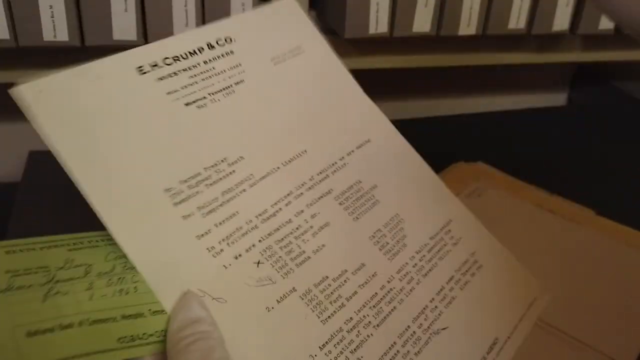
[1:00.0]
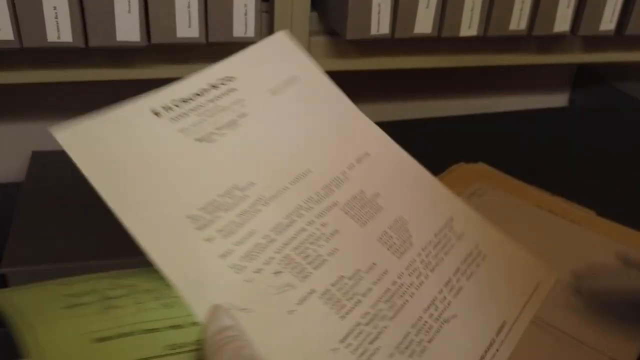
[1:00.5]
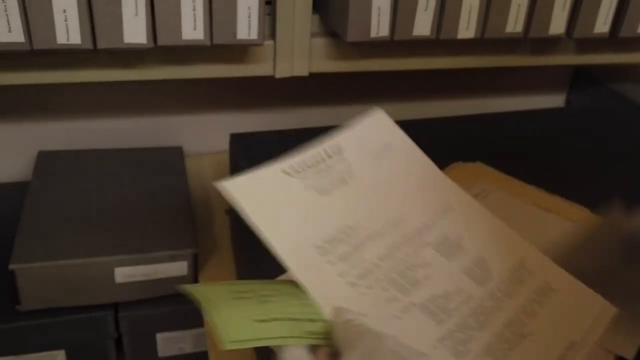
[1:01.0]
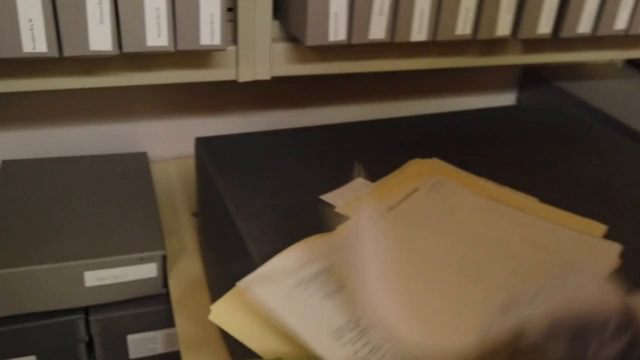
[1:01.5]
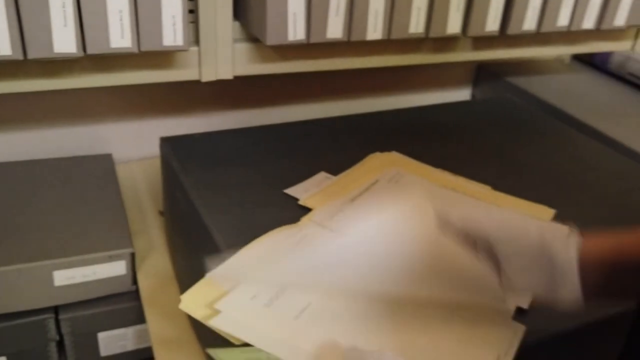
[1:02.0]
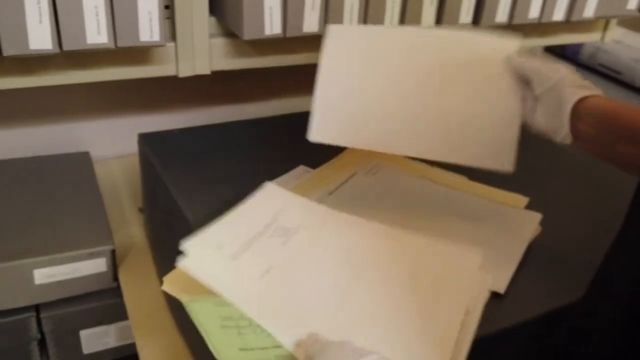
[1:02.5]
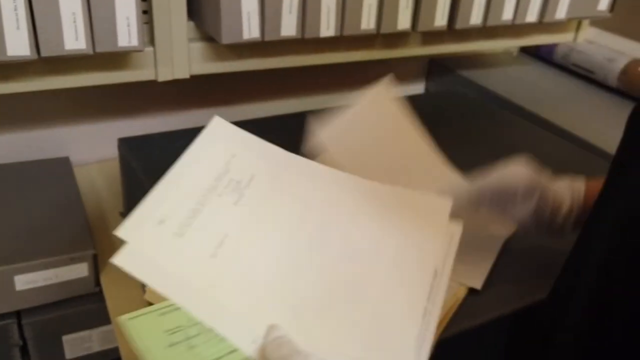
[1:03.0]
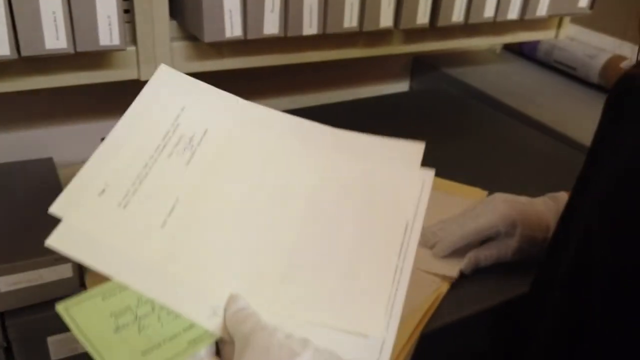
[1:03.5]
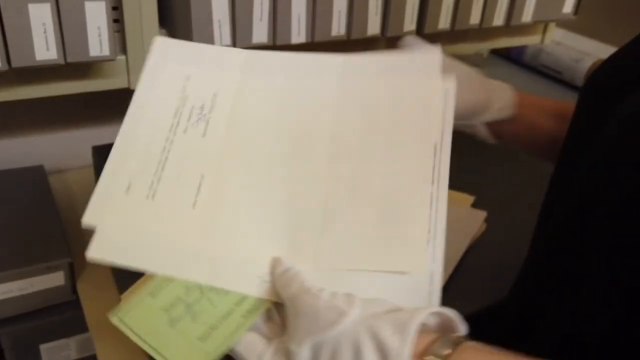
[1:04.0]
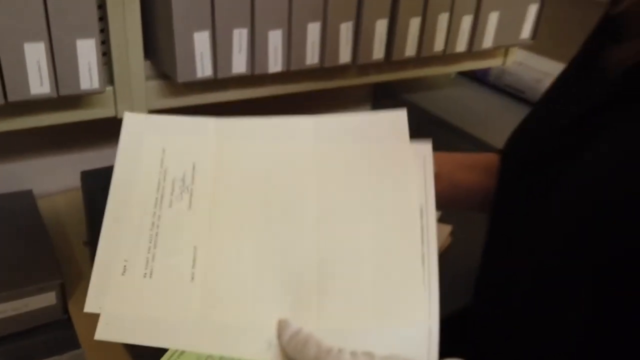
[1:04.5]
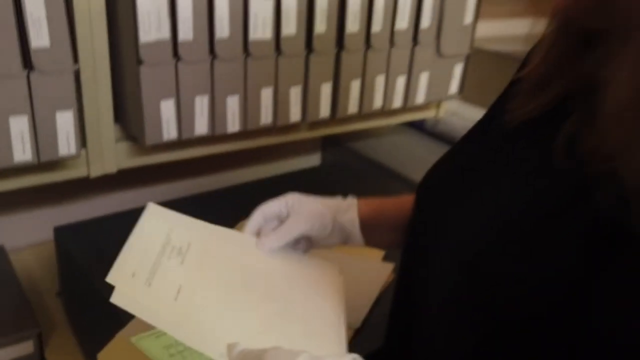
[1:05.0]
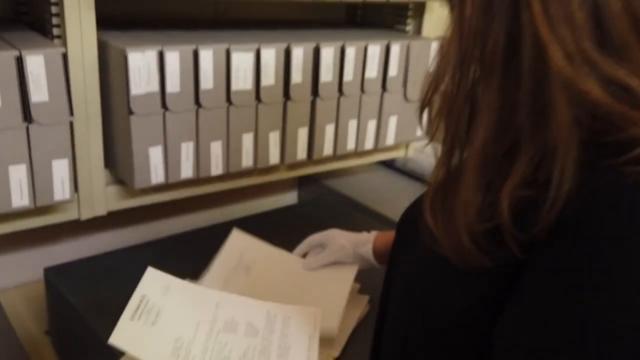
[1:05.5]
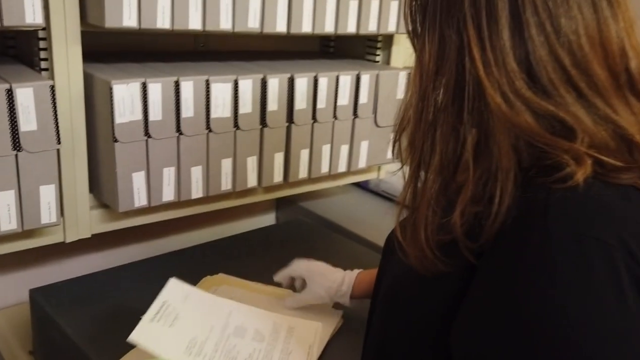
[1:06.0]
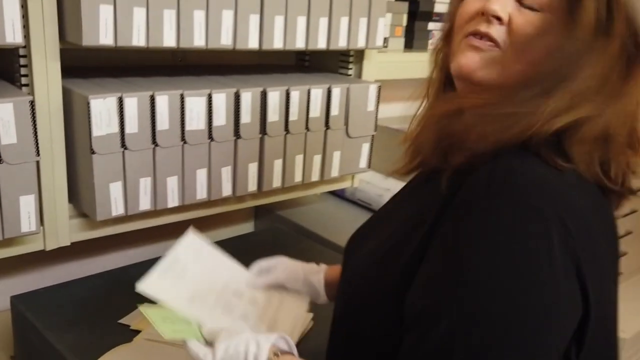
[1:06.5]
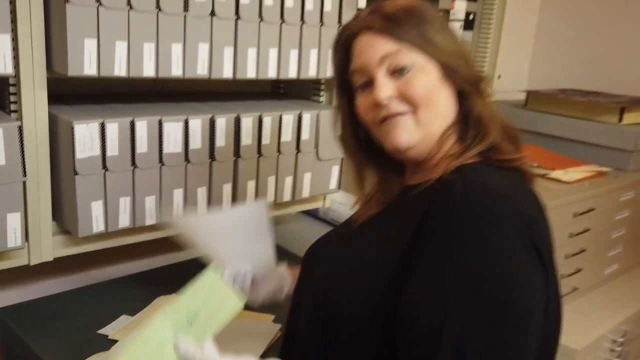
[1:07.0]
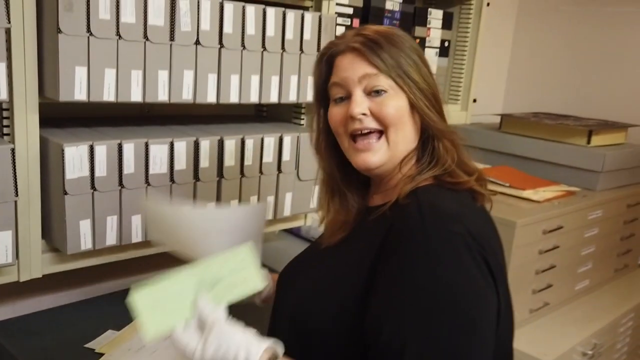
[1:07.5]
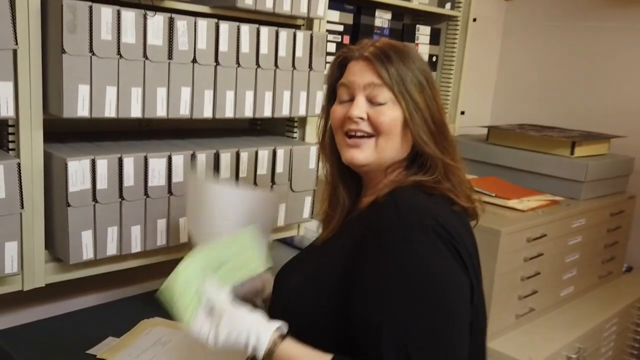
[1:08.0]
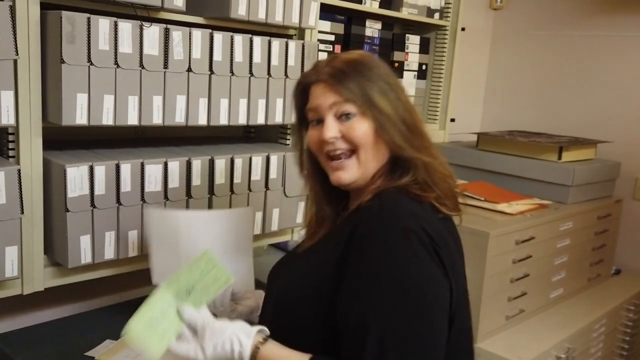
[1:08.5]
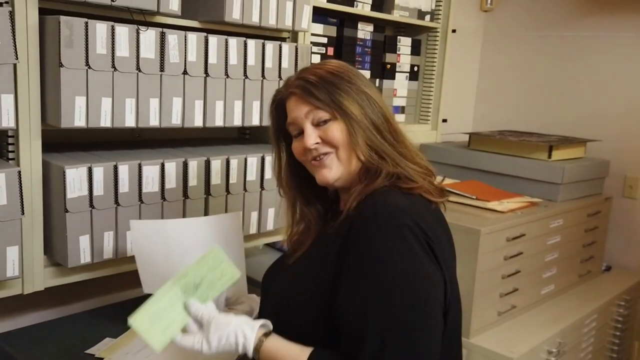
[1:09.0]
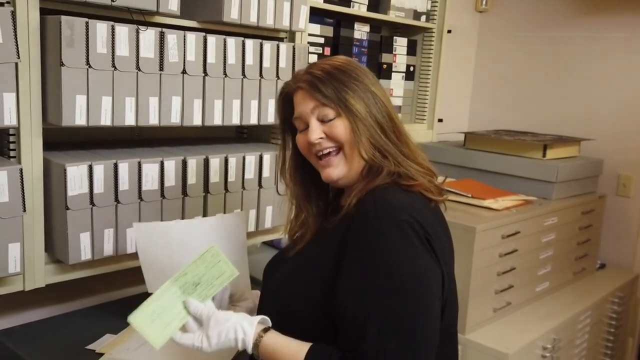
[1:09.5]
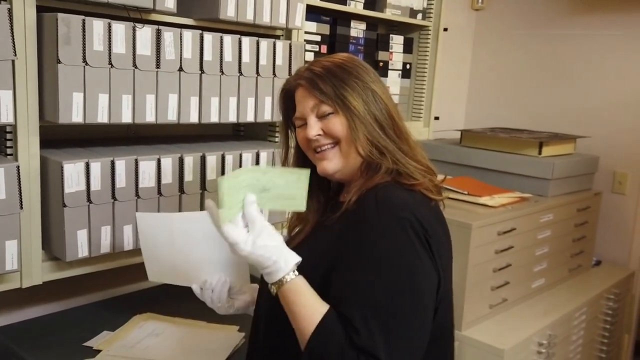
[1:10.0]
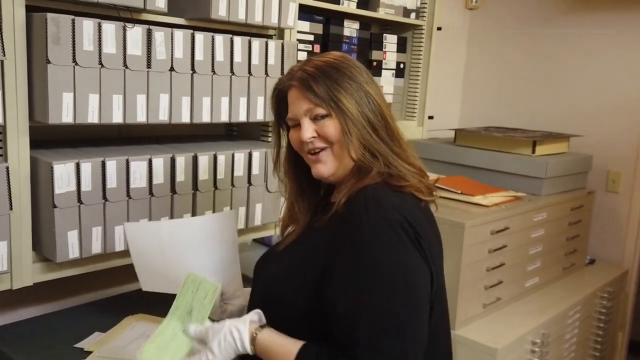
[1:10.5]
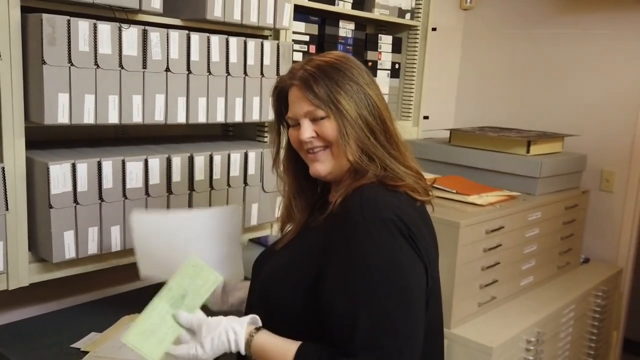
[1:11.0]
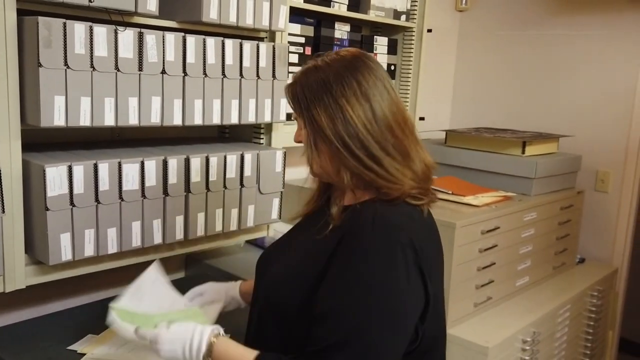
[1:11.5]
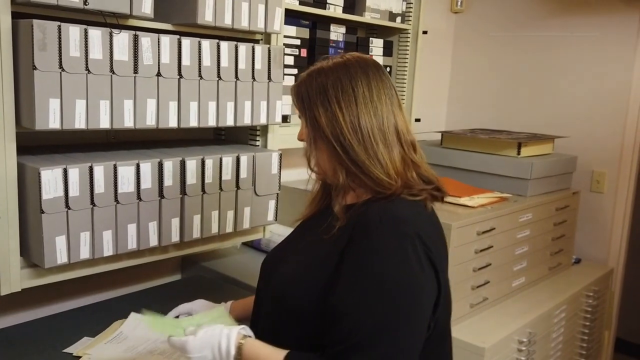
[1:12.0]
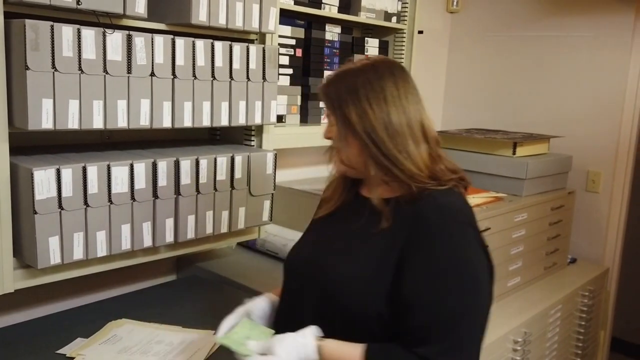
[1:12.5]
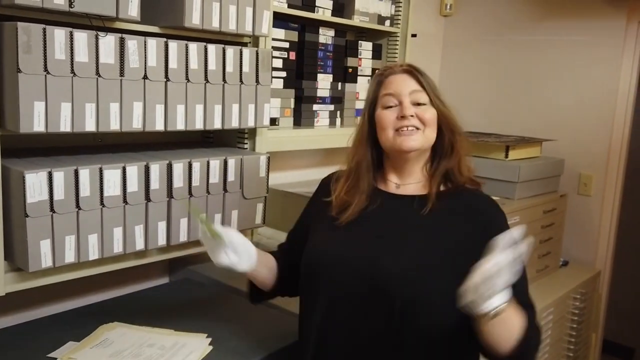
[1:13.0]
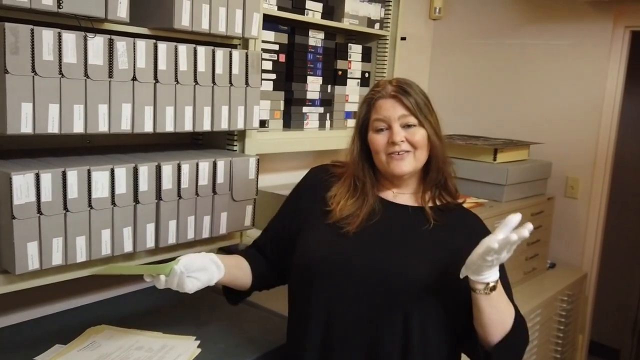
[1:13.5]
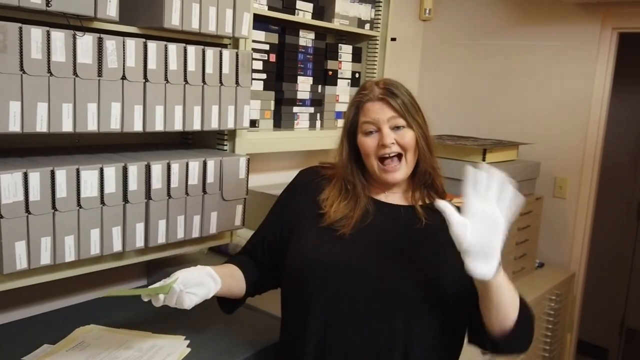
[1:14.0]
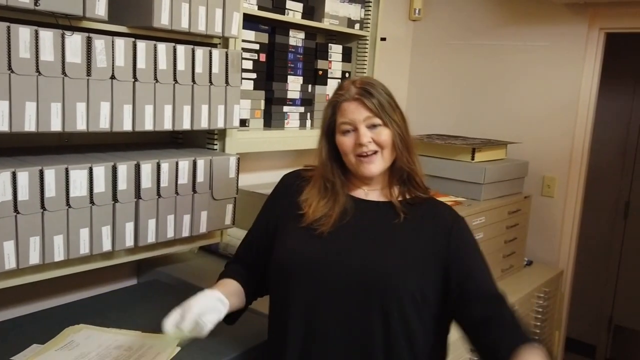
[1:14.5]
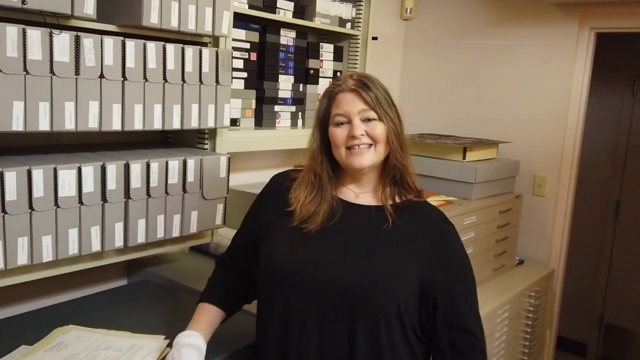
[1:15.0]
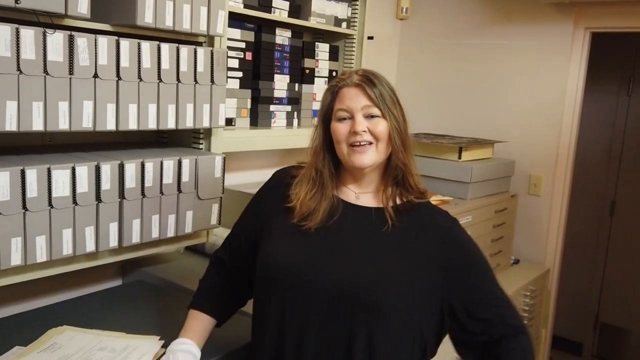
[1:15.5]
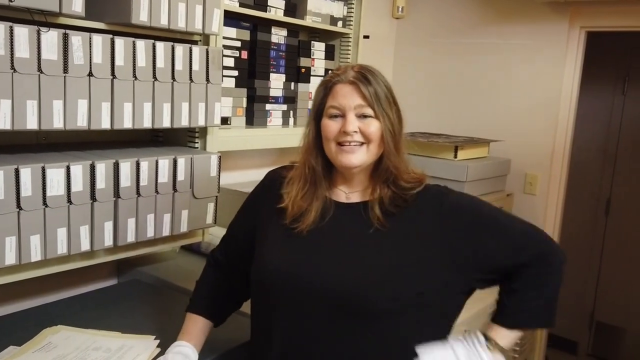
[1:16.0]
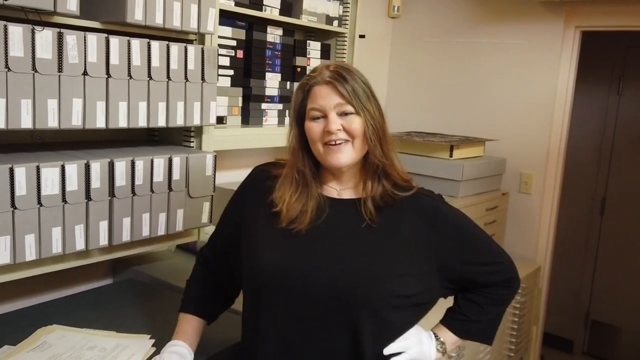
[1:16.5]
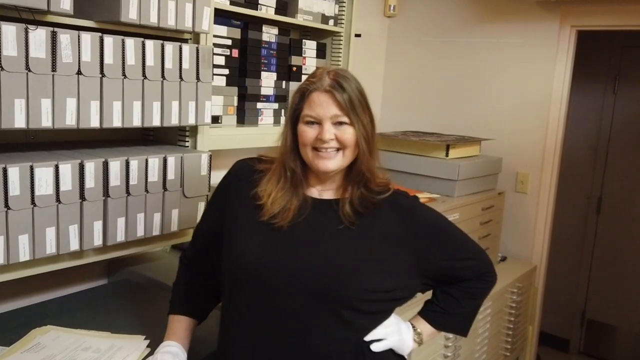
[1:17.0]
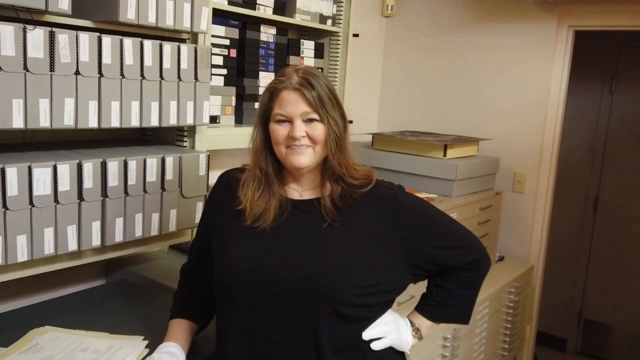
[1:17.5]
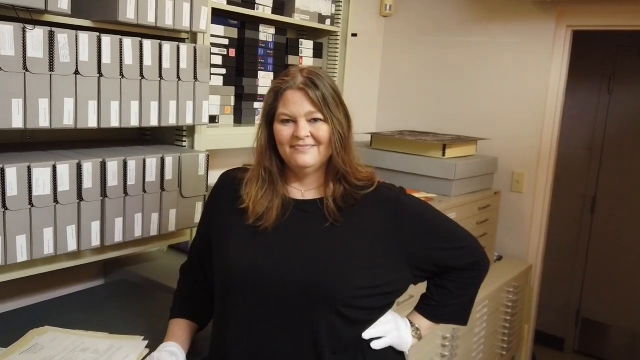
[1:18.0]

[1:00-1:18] The focus starts on the 8x11 piece of paper the woman was holding. She puts it back into the vanilla folder and now holds a couple of other pieces of paper along with the check. Looking at the camera, she holds two pieces of paper, then puts one piece down and still has the check in her right hand. She keeps smiling, talking and looking into the camera. At the end, she has her hand on her hip with her elbow out and a slight smirk.